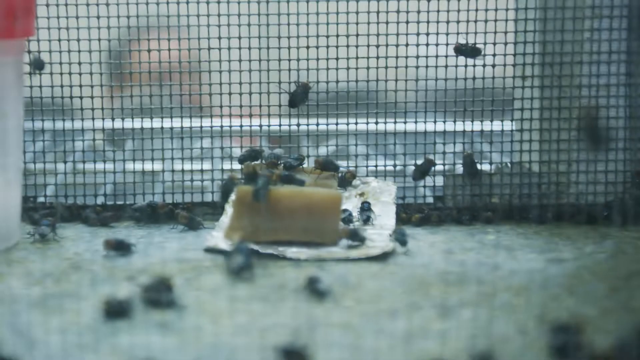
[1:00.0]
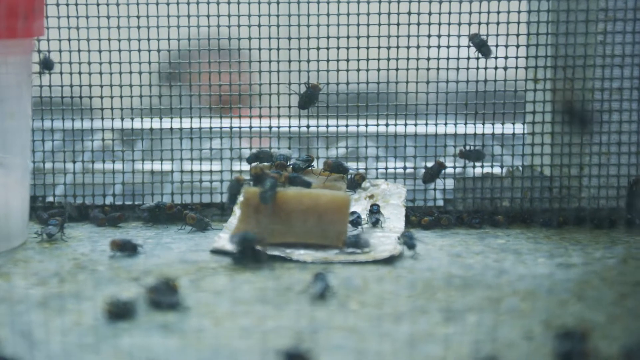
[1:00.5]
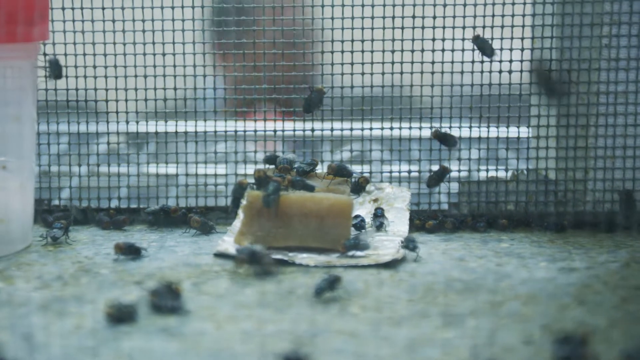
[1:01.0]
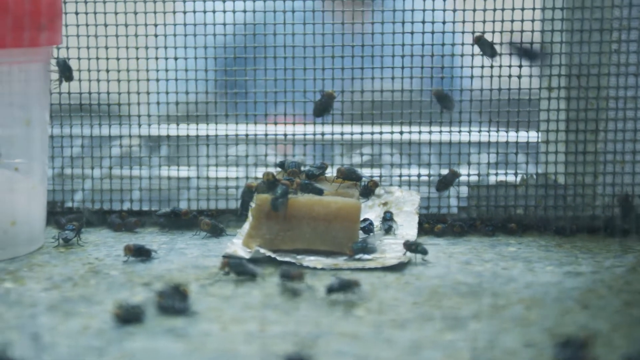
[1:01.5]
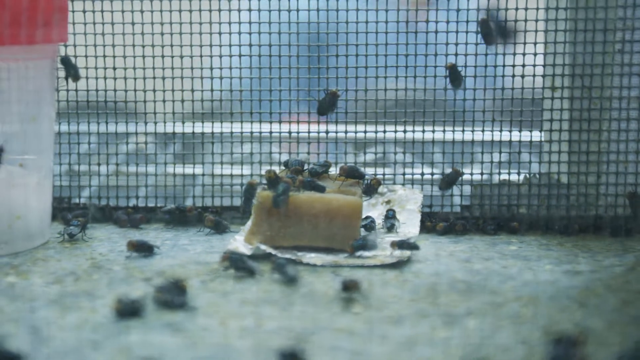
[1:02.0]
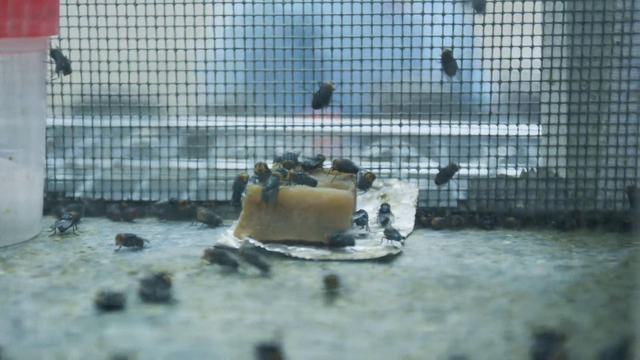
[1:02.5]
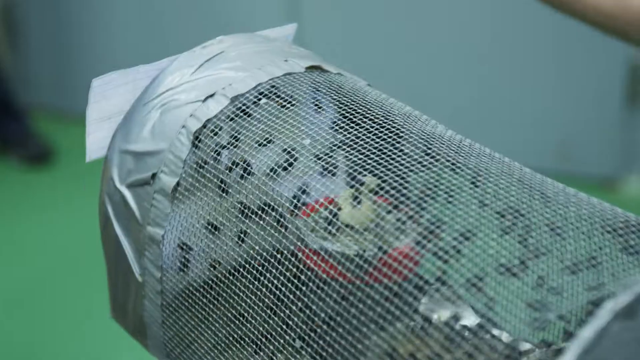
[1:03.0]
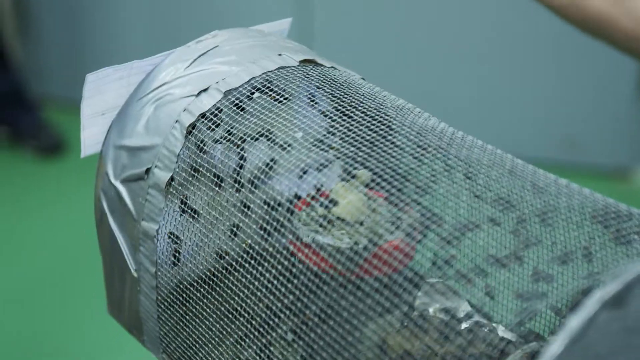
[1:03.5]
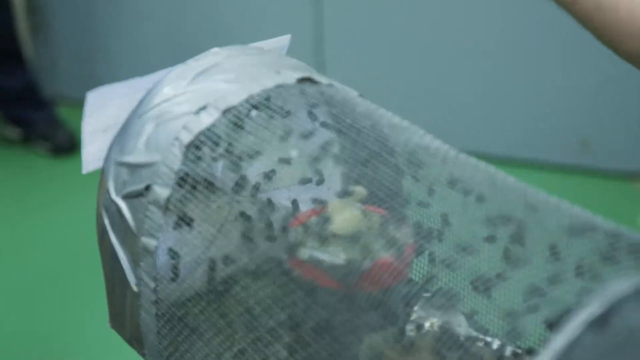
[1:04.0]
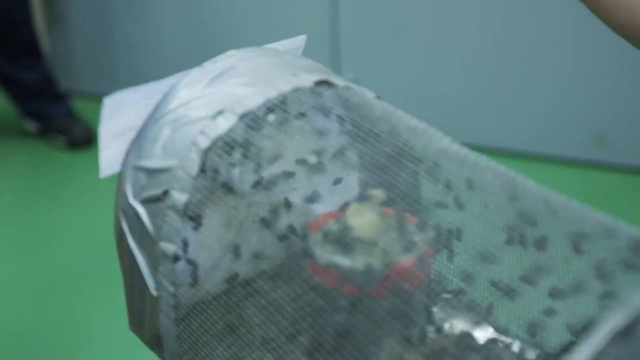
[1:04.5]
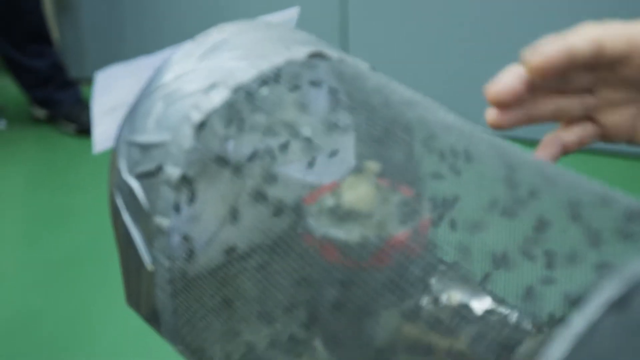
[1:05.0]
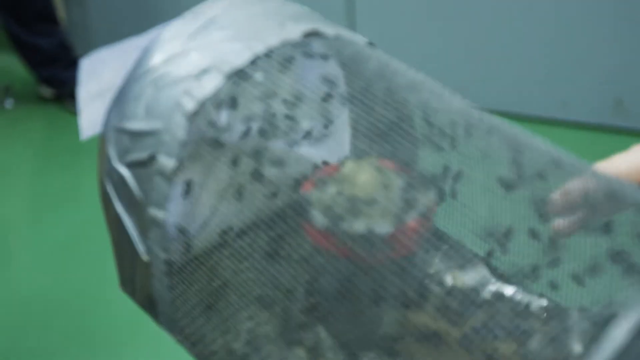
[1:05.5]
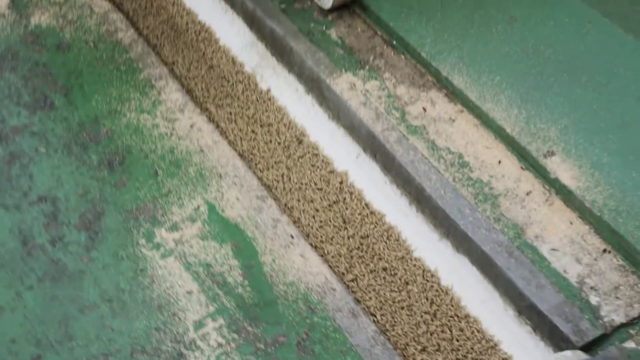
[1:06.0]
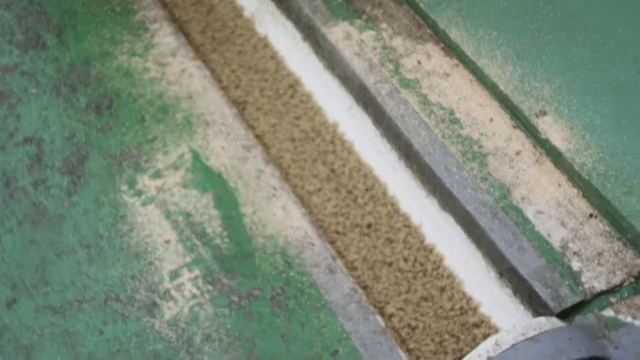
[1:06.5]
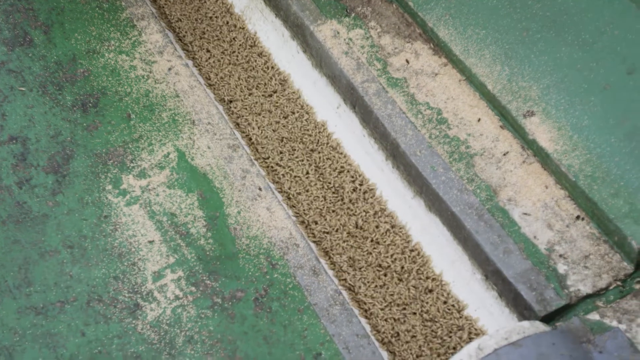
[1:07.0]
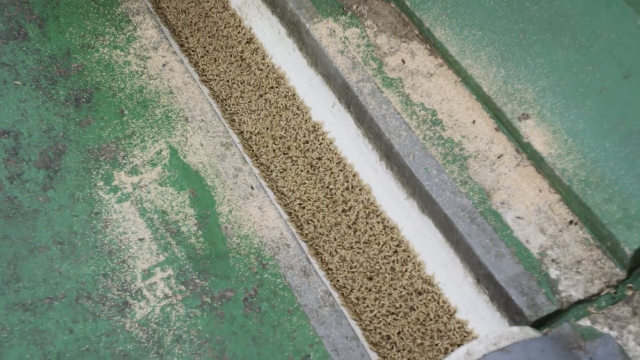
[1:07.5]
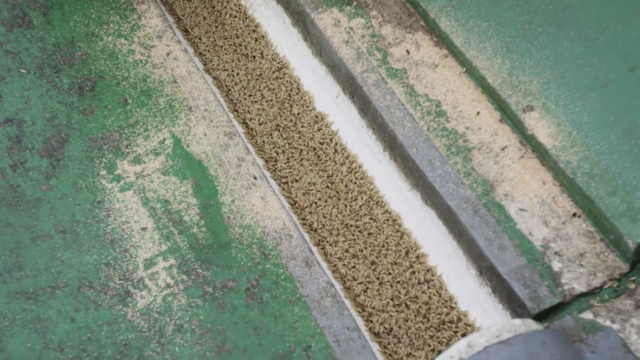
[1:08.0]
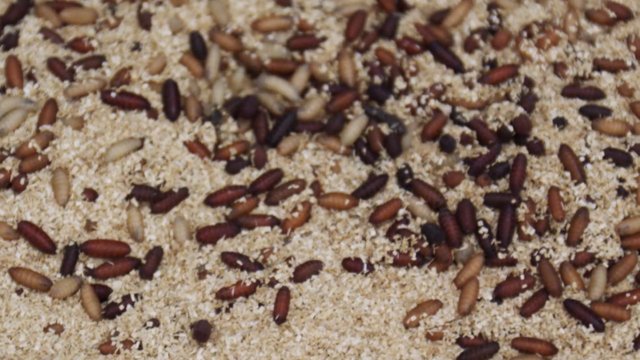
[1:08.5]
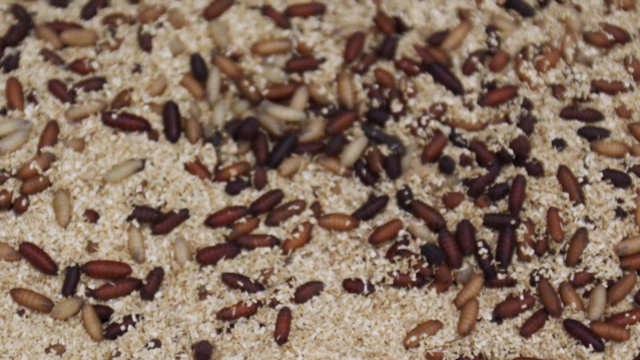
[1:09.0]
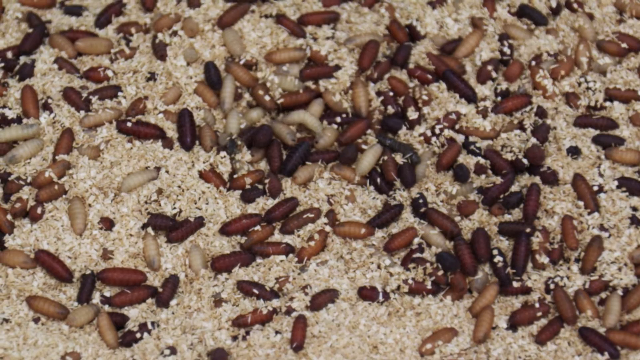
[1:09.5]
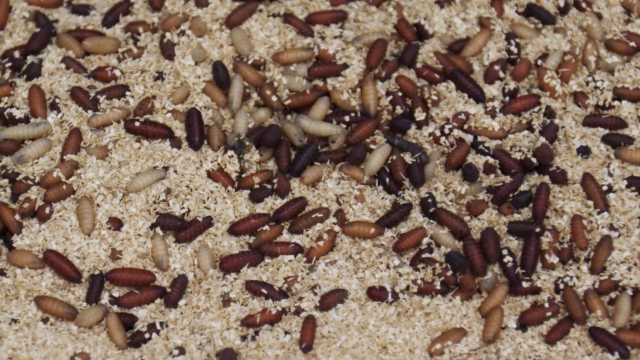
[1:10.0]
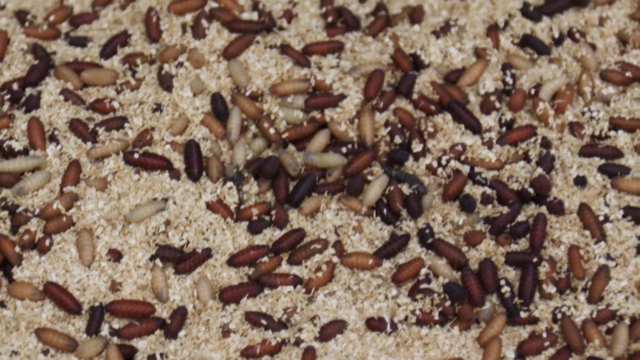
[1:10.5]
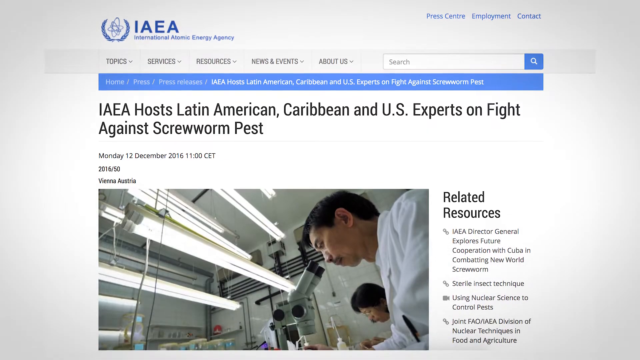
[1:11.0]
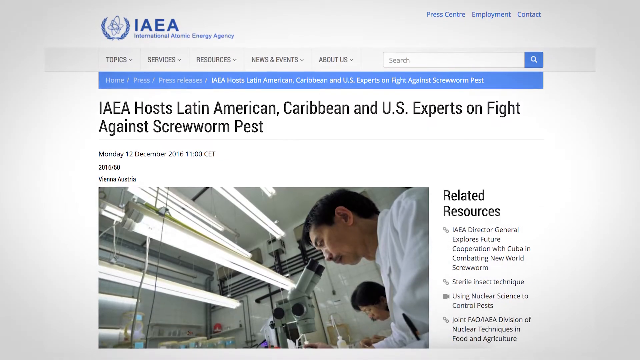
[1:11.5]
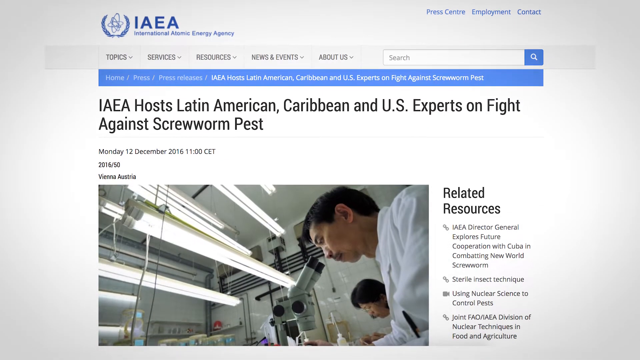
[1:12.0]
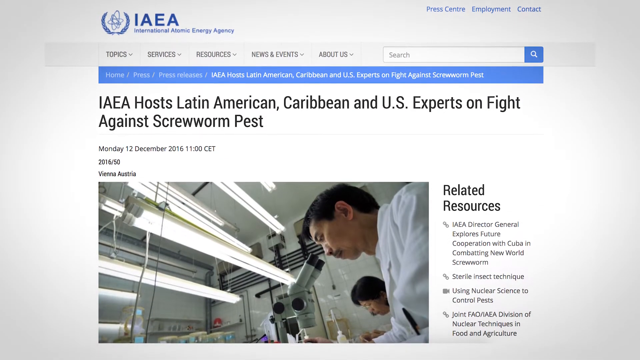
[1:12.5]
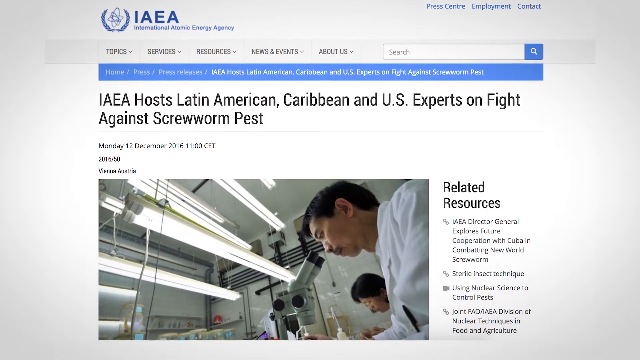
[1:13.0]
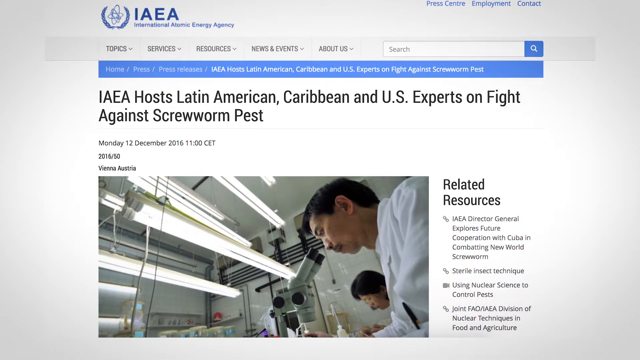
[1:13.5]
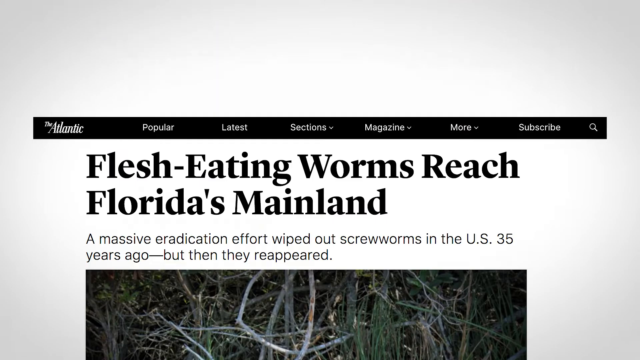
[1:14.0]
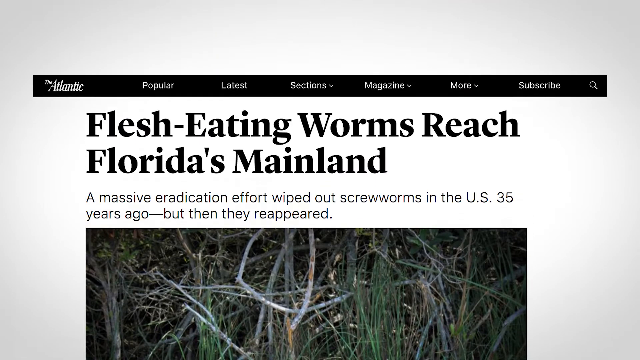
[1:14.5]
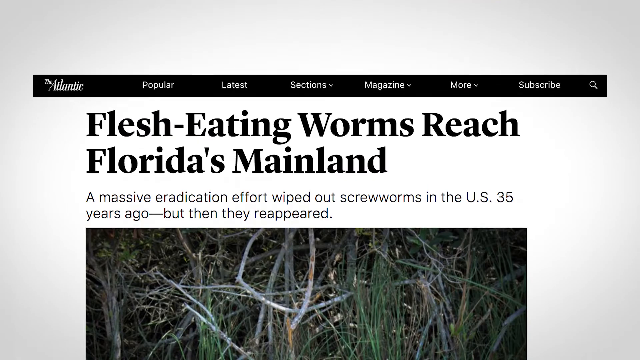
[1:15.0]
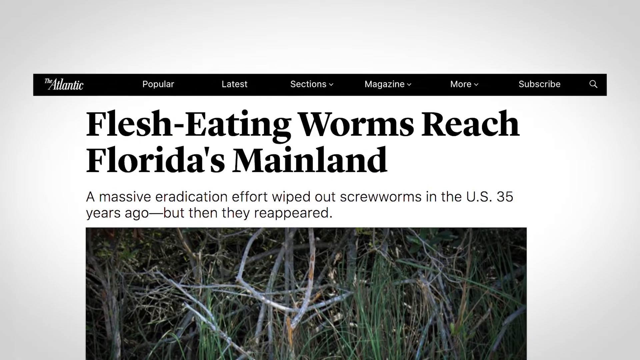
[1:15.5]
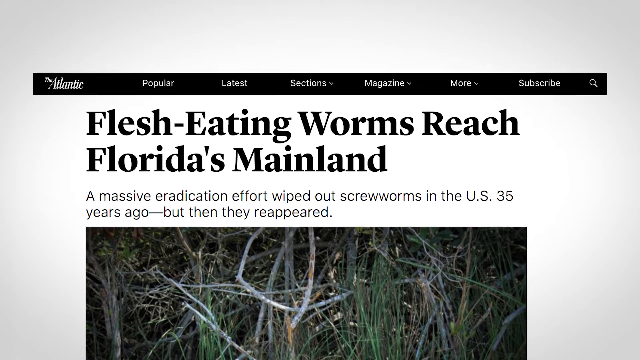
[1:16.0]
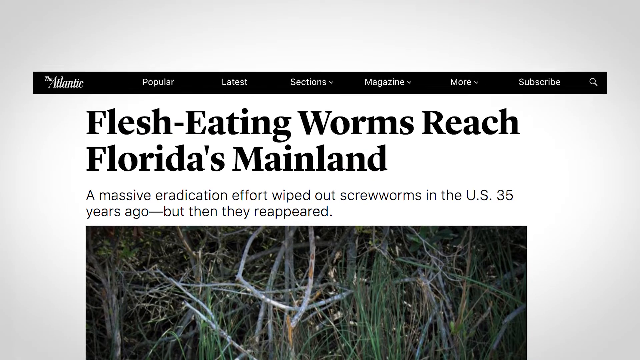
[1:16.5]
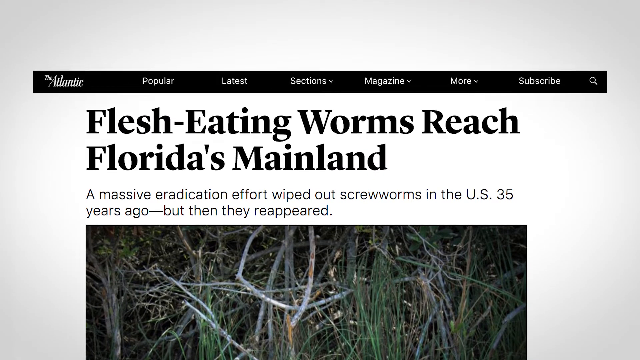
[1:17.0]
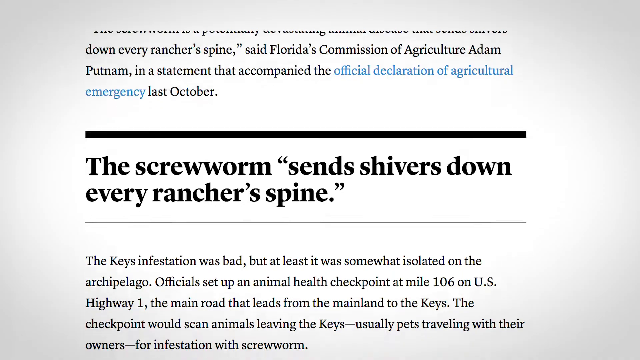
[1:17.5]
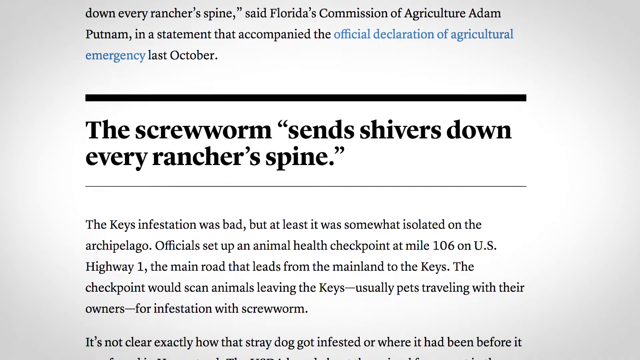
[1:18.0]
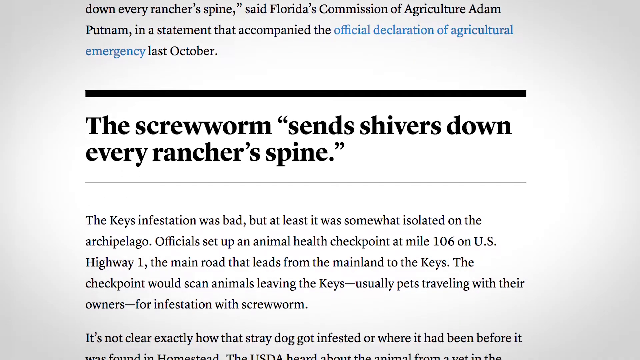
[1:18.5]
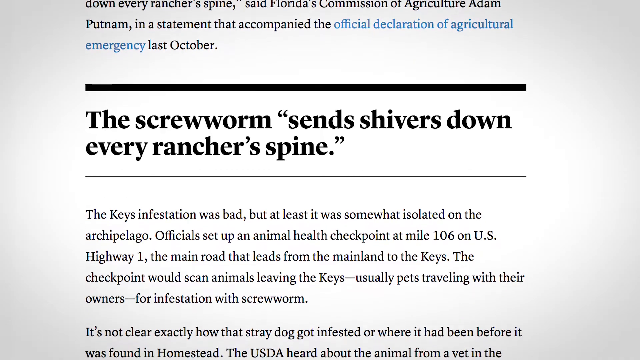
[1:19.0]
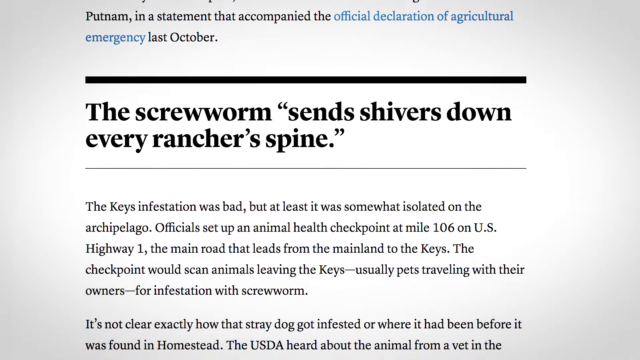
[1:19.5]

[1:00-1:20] Flies or some other type of insect are inside a cage, all swarming around an object in the center, with the grating of the cage visible in the background. To the left there appears to be a small plastic cup with a red lid. Another angle shows the outside of the cage, with hundreds of flies or flying insects inside; duct tape is wrapped on the side of the cage to keep it closed. Some close-up shots of the insects follow. The video then moves to a web page titled "IAEA", with the heading "IAEA hosts Latin American Caribbean and US experts on fight against screwworm pests". A photo shows two men in a laboratory looking into a microscope, and the page scrolls through different parts of the website to show different areas of the article.